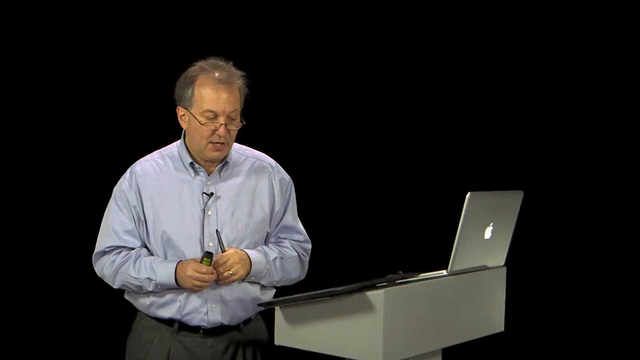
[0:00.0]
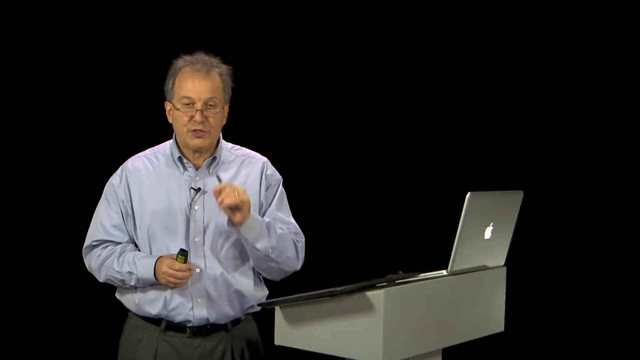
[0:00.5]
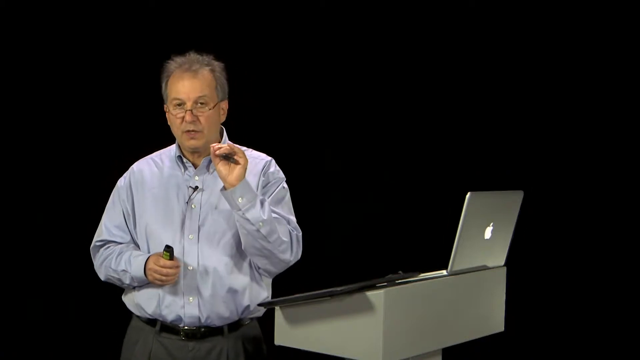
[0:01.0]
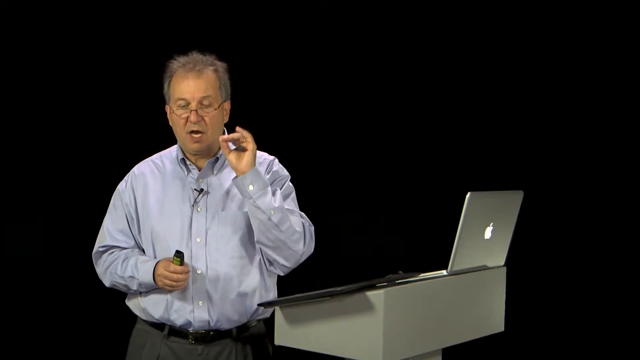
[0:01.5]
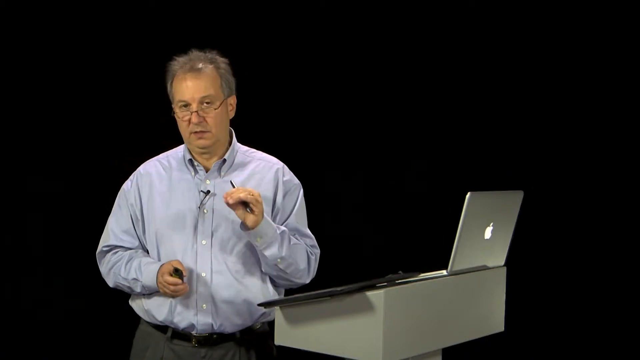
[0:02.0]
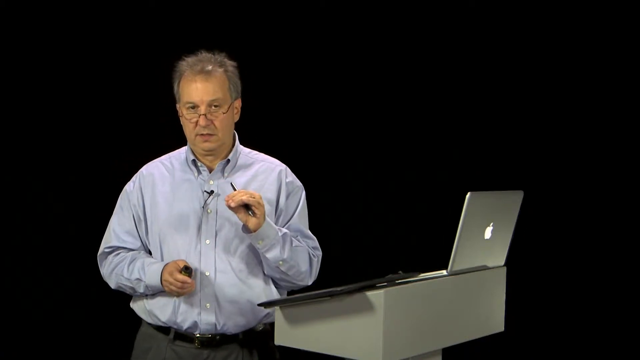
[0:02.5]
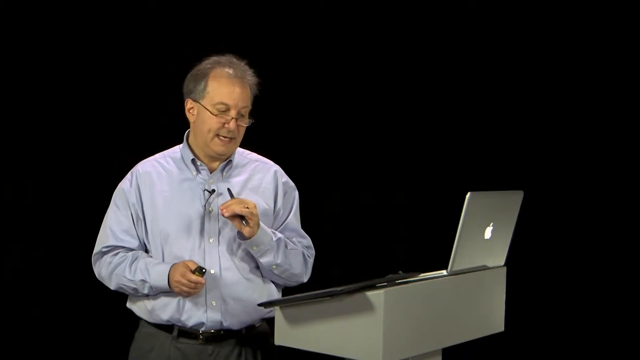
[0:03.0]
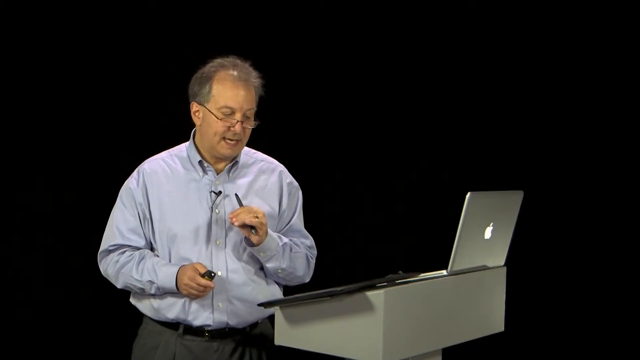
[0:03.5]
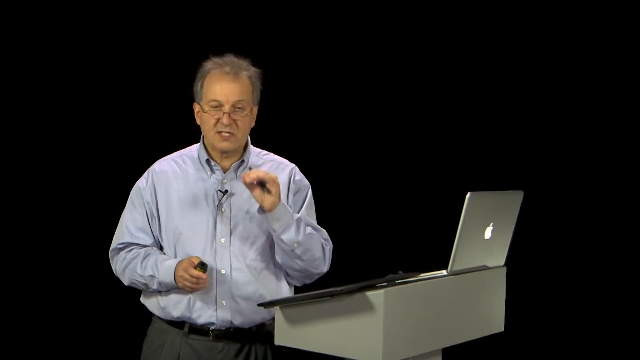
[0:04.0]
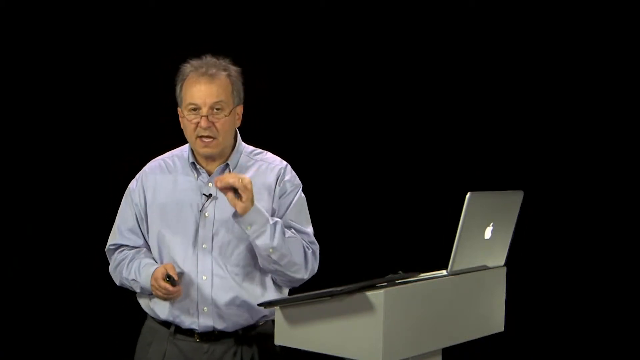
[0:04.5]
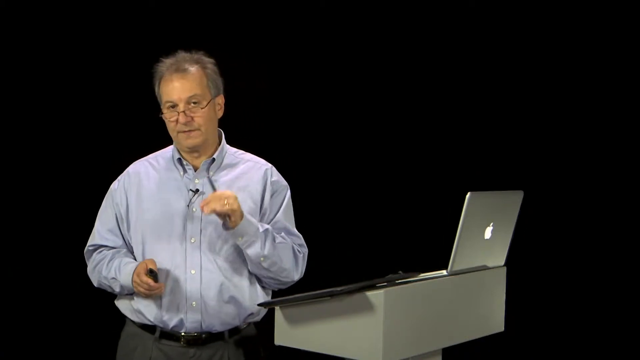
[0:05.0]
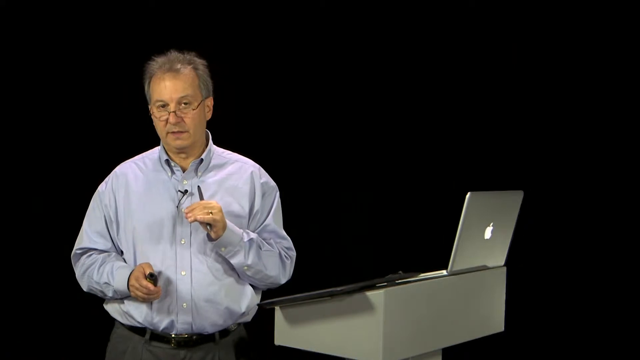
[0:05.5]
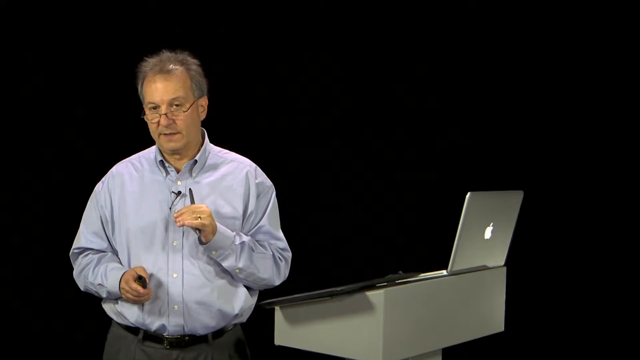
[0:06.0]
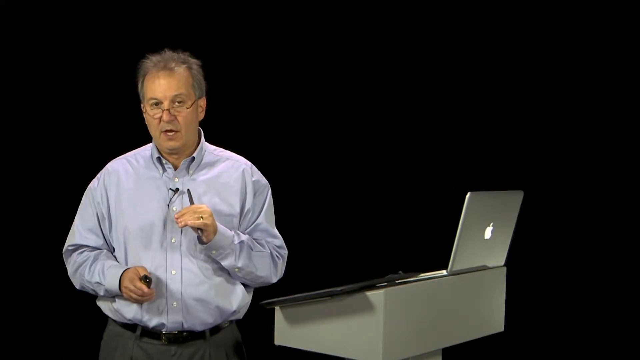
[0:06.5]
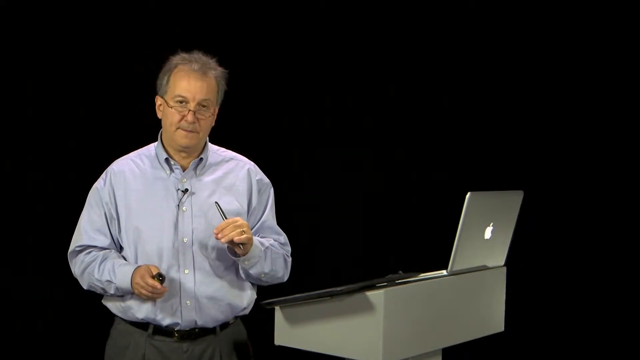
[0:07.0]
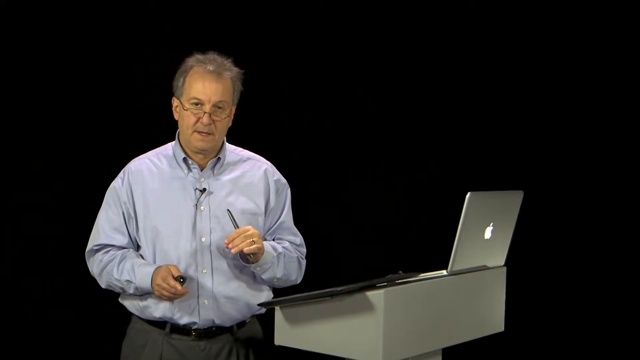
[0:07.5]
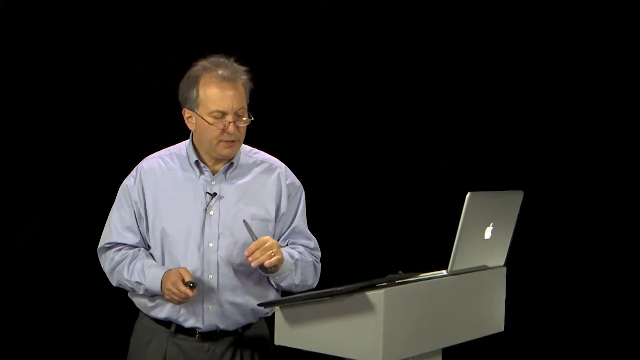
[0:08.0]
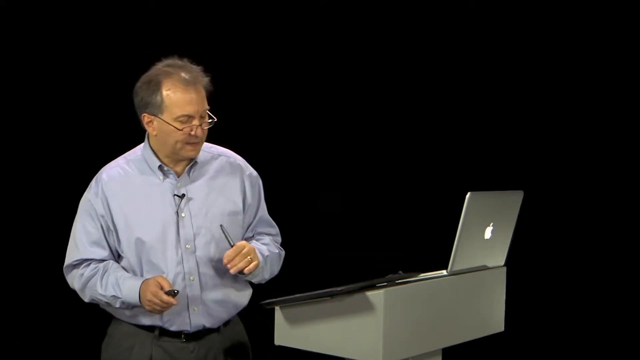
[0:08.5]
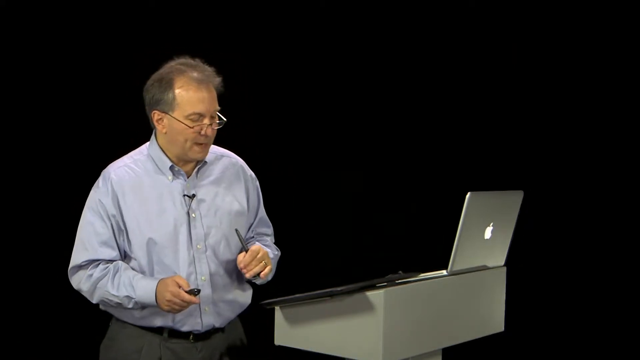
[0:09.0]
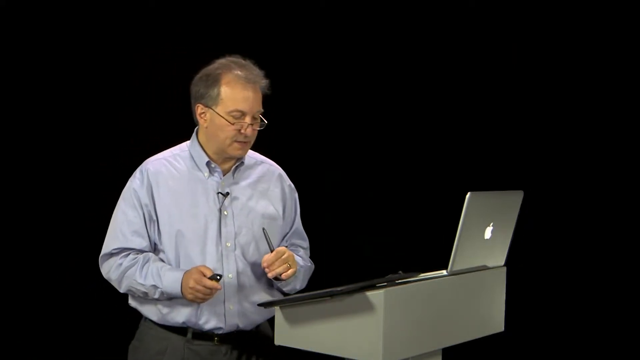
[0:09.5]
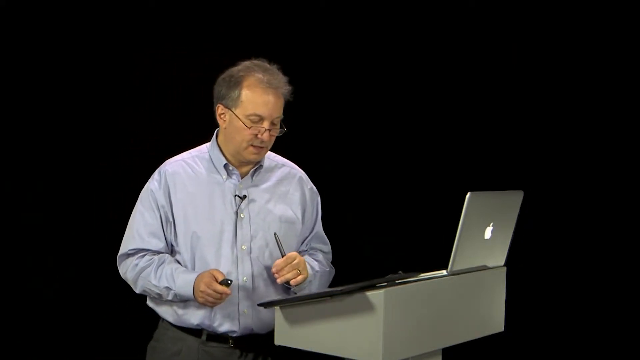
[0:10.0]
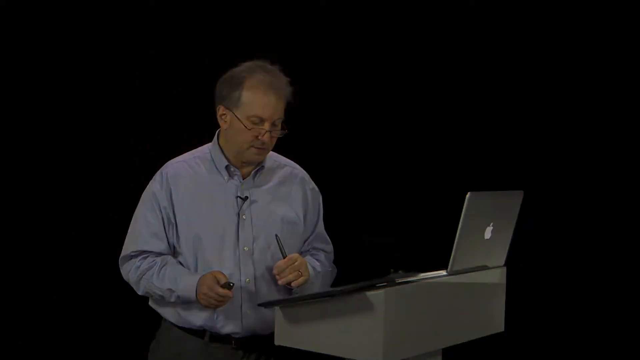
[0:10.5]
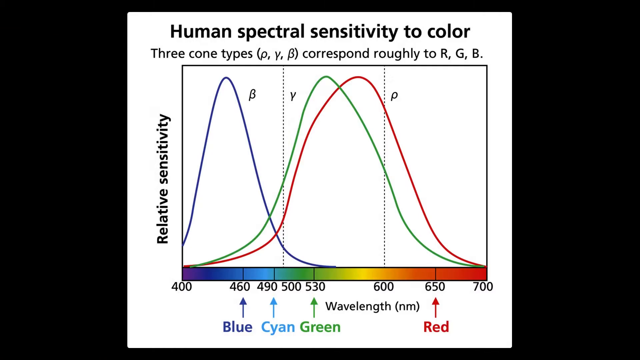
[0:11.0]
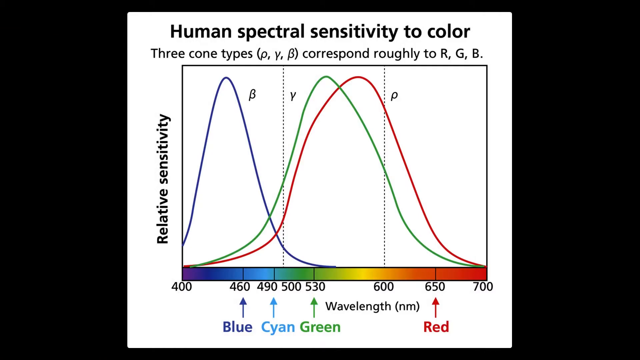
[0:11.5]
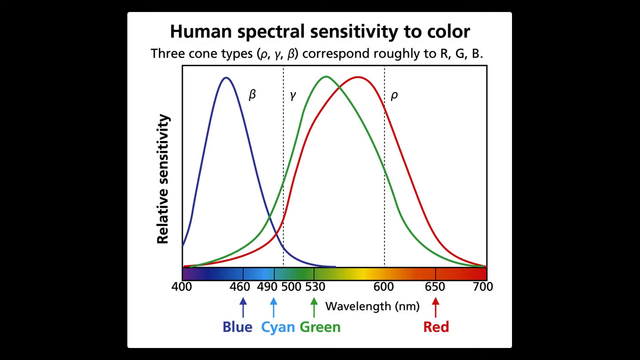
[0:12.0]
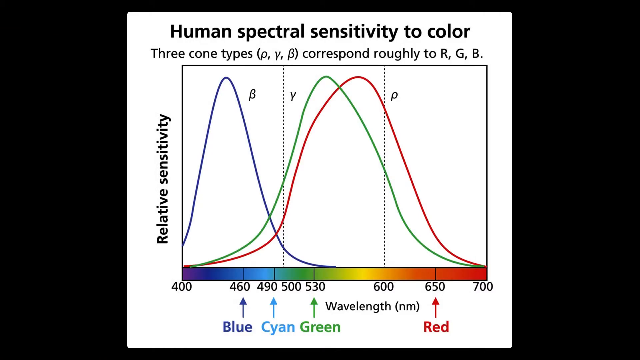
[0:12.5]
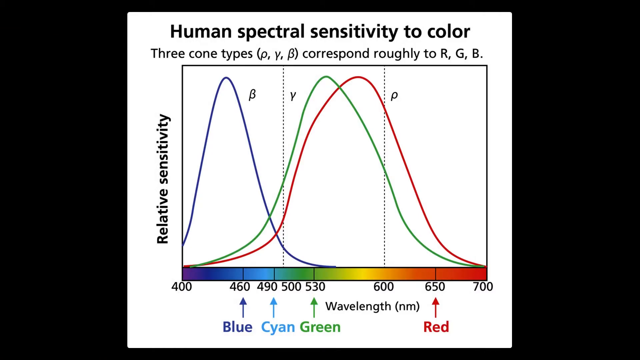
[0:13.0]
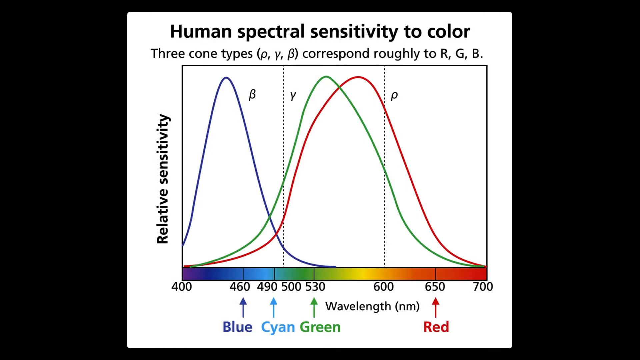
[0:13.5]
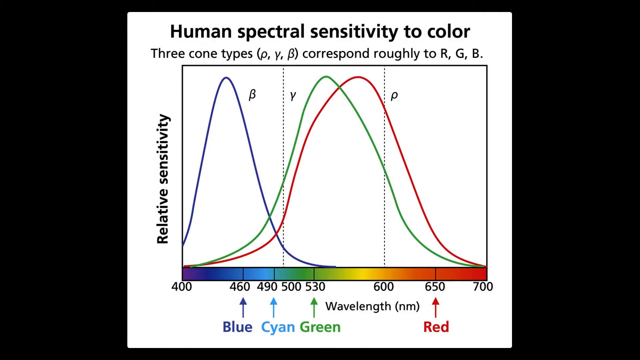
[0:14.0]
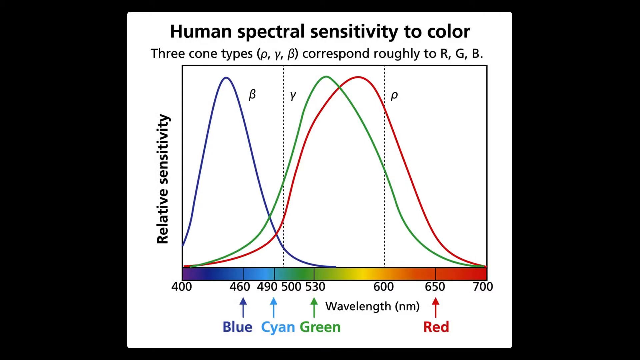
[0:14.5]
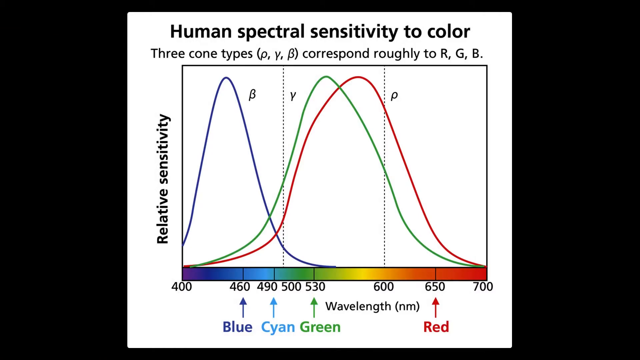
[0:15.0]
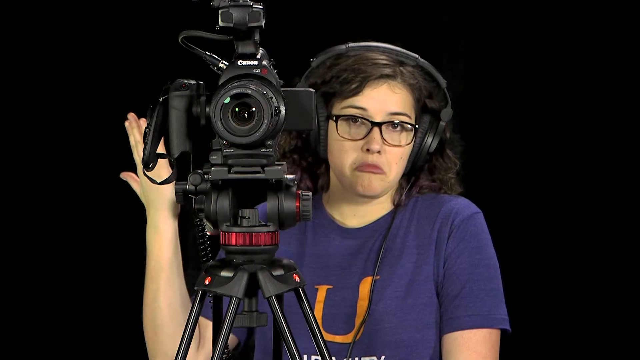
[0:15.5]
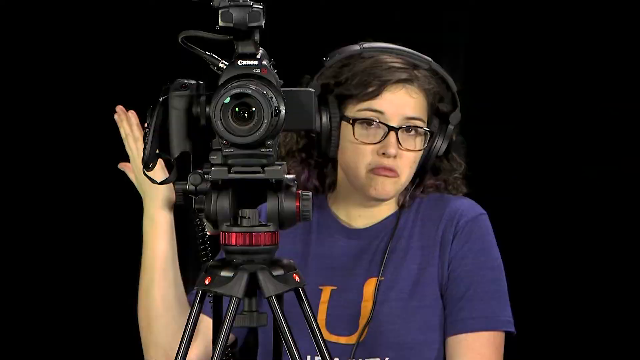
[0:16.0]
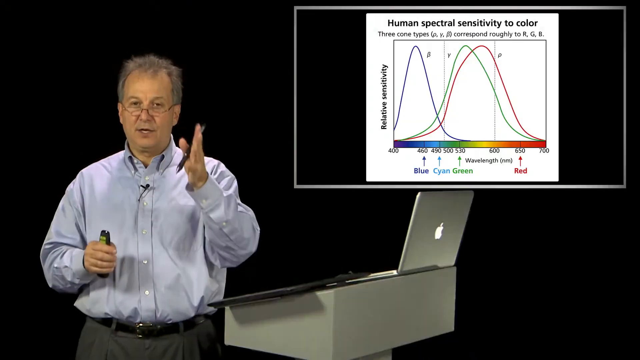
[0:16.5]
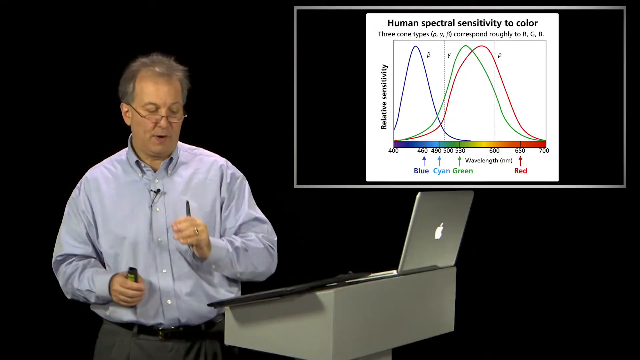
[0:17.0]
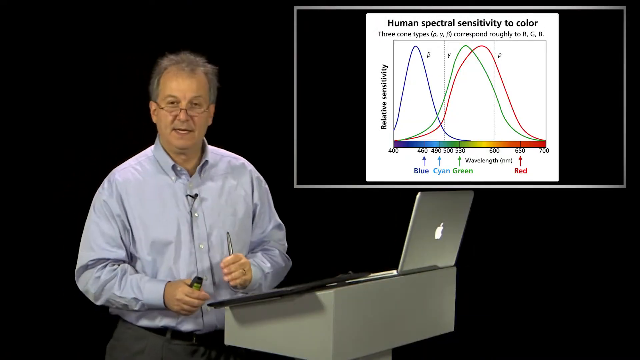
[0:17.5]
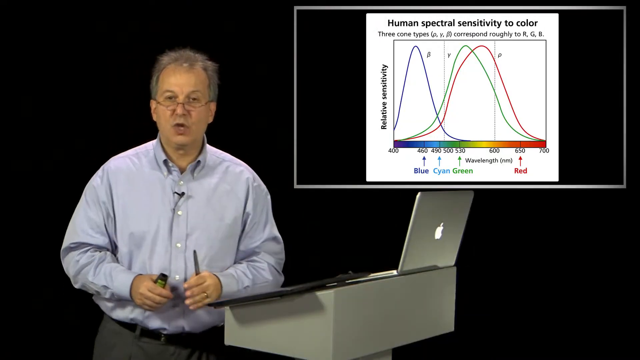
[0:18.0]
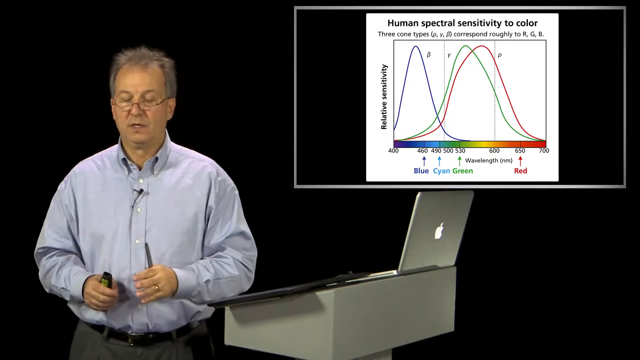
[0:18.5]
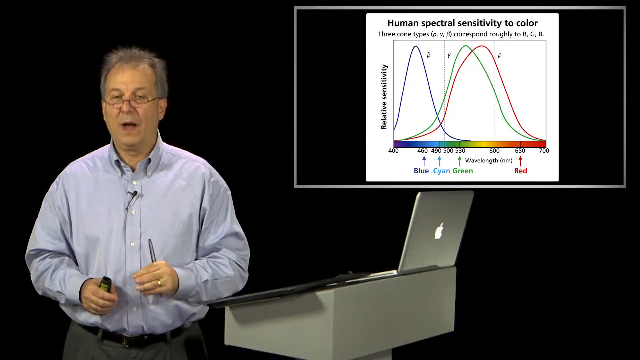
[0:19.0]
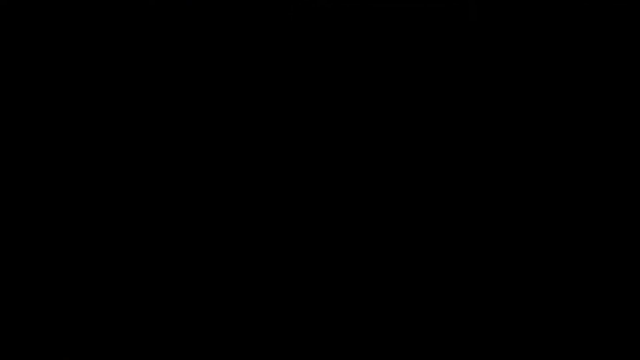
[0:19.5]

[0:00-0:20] A man with glasses talks directly to the camera against a completely black background. A diagram of spectral sensitivity to color is shown, with three different types of cones. The man is very old, appears to be Caucasian, has gray coloration, and wears glasses with two oval lenses. He is in the middle of the scene.